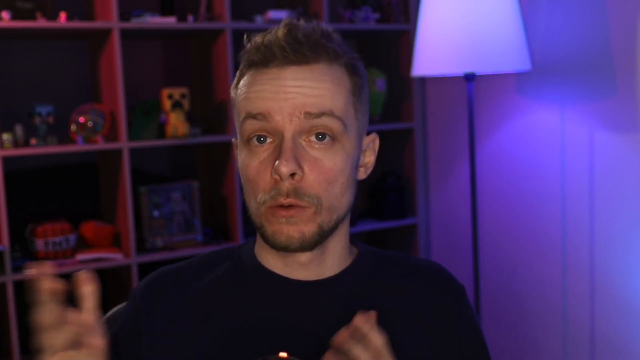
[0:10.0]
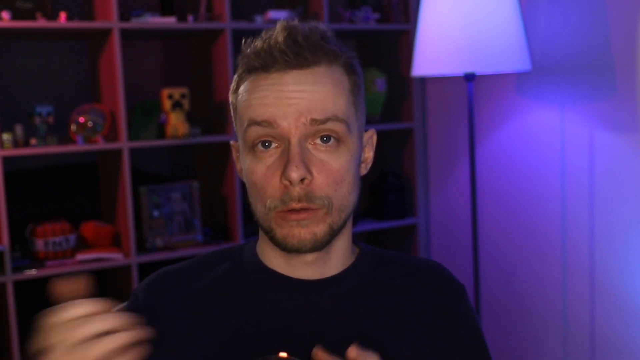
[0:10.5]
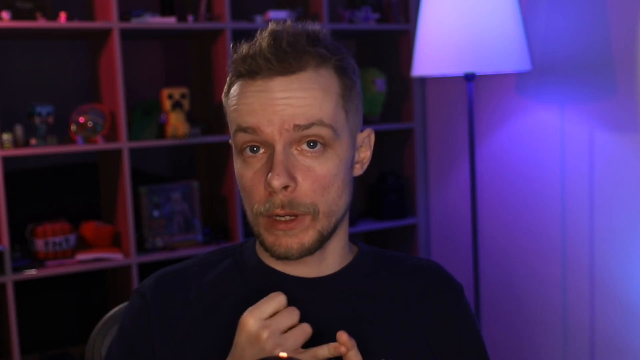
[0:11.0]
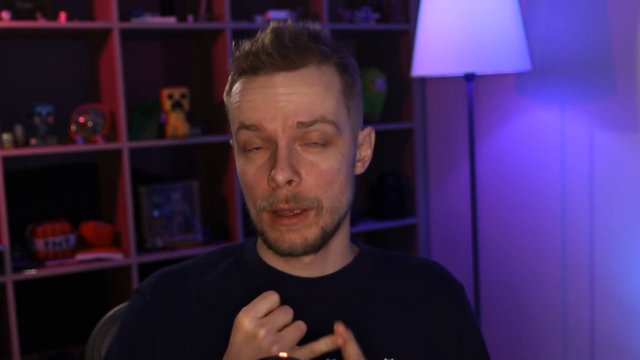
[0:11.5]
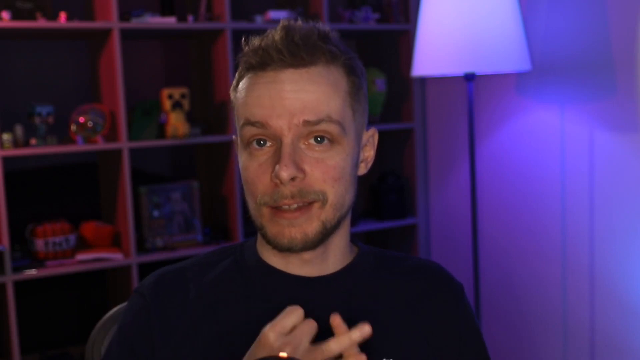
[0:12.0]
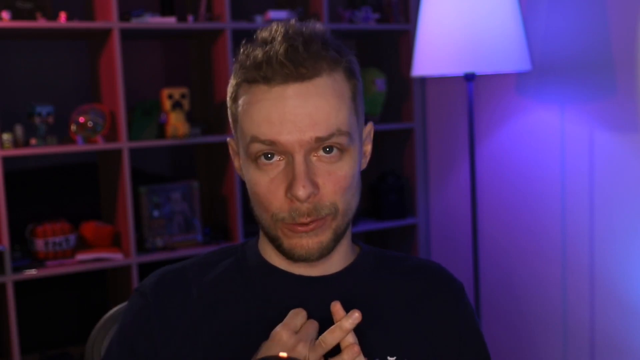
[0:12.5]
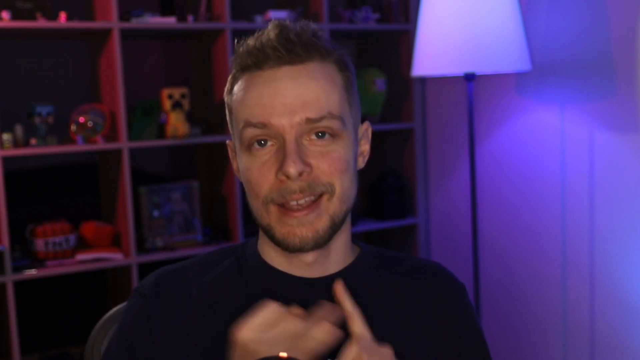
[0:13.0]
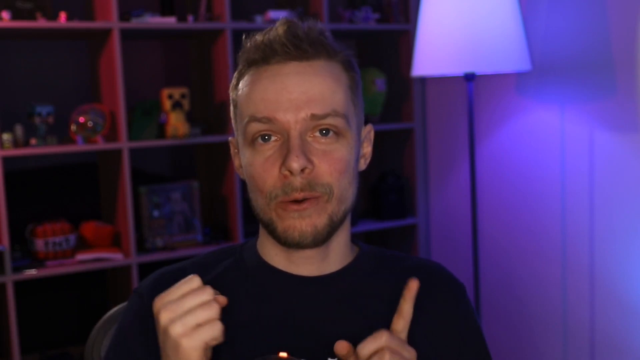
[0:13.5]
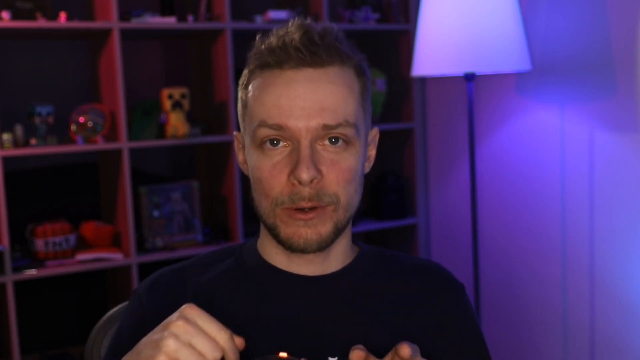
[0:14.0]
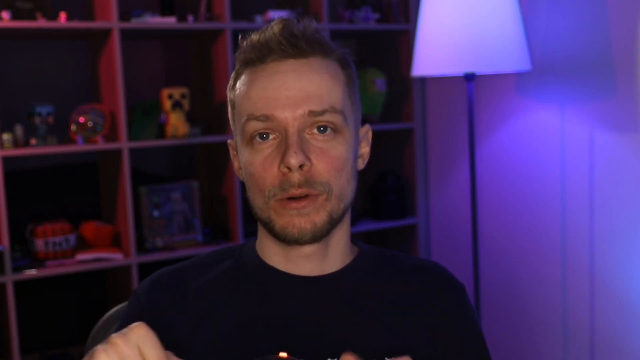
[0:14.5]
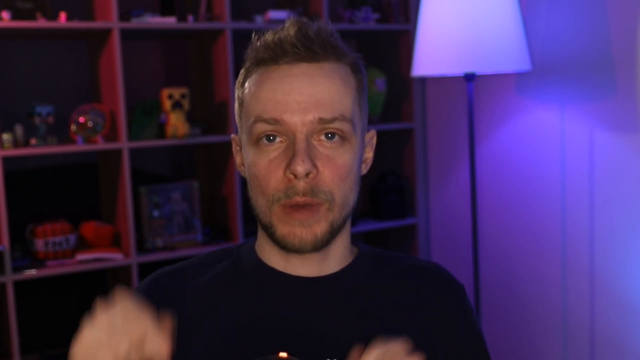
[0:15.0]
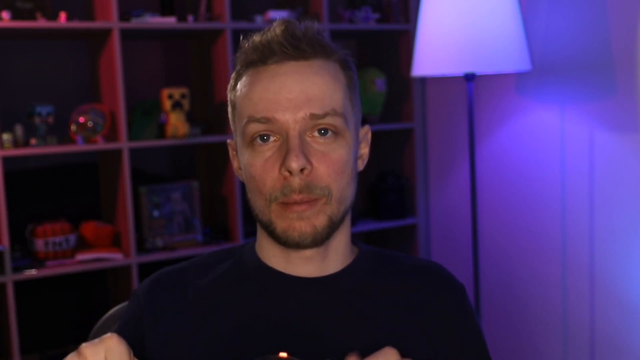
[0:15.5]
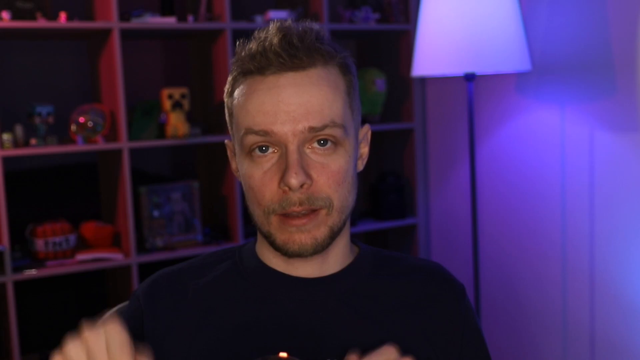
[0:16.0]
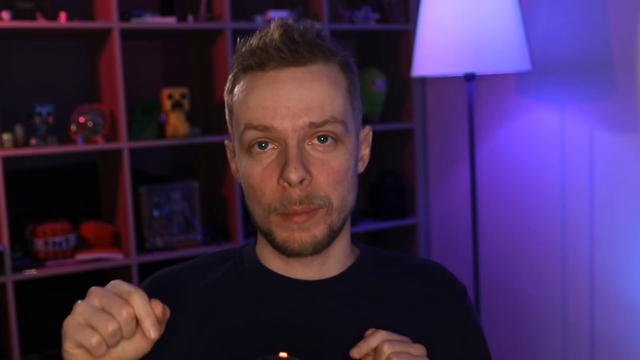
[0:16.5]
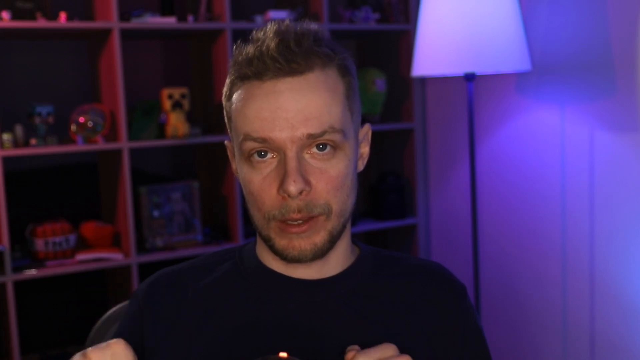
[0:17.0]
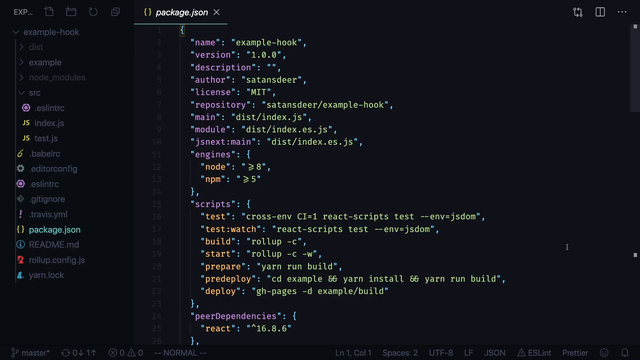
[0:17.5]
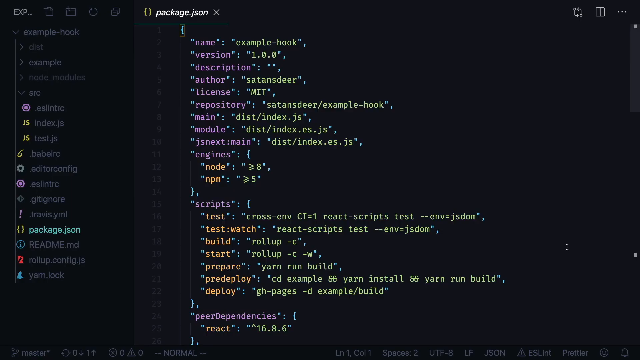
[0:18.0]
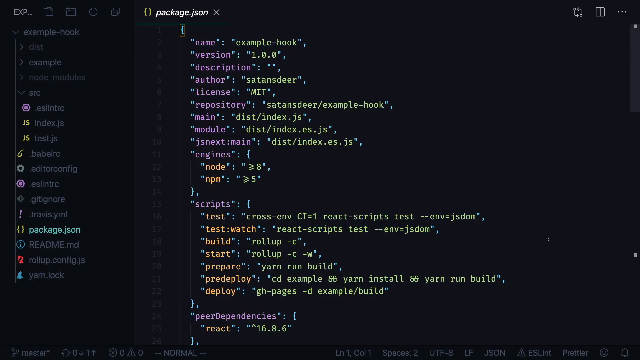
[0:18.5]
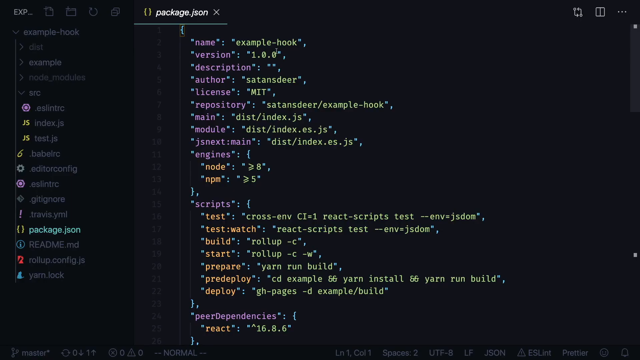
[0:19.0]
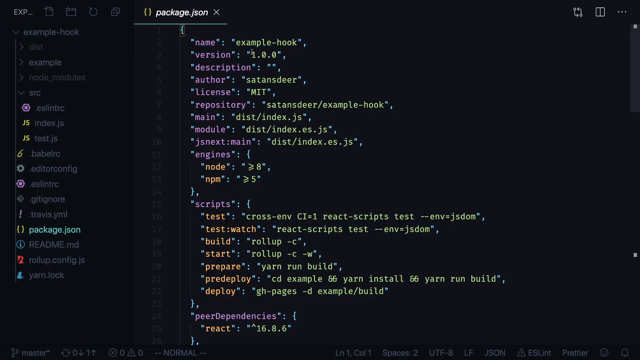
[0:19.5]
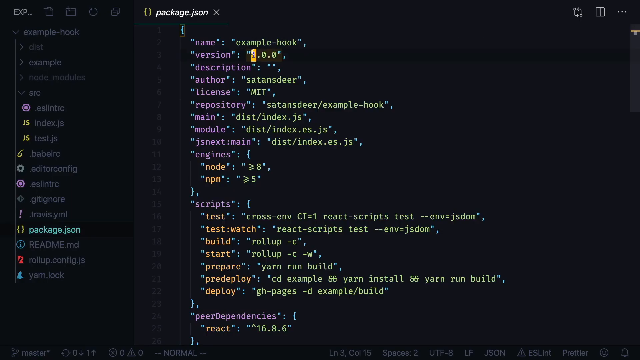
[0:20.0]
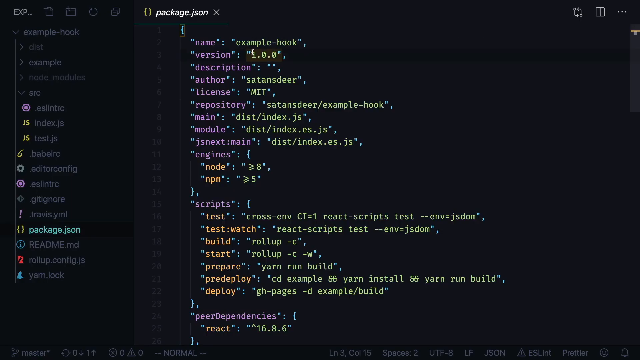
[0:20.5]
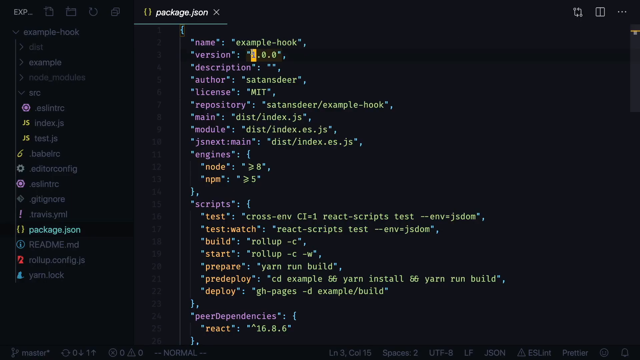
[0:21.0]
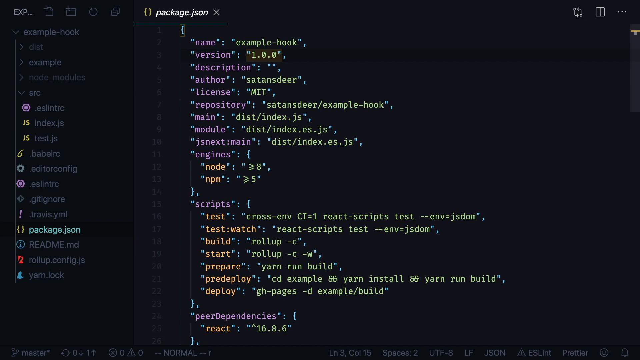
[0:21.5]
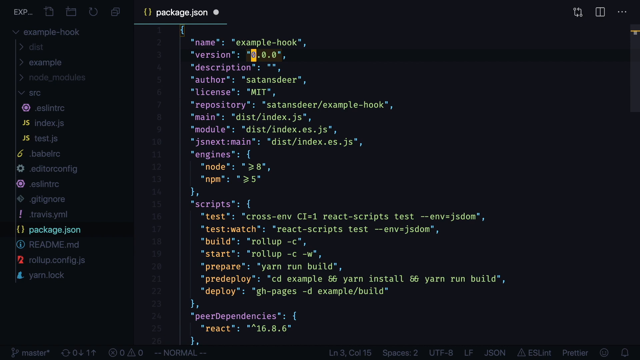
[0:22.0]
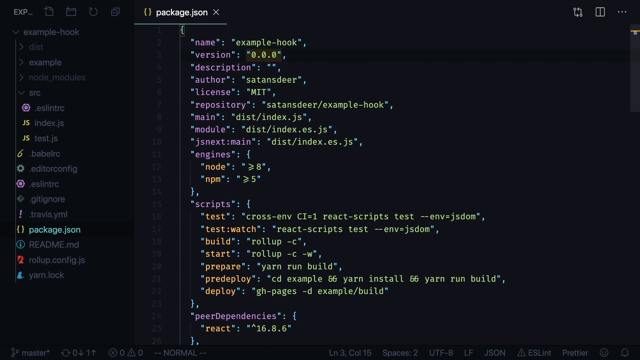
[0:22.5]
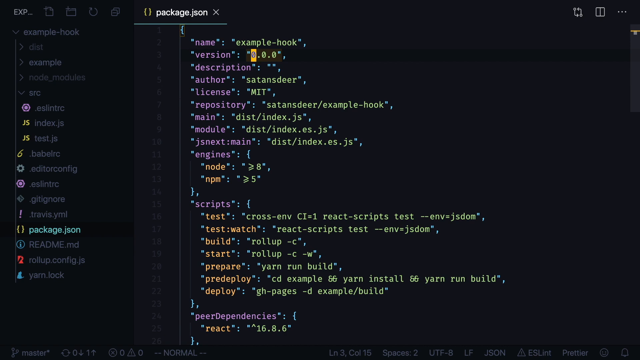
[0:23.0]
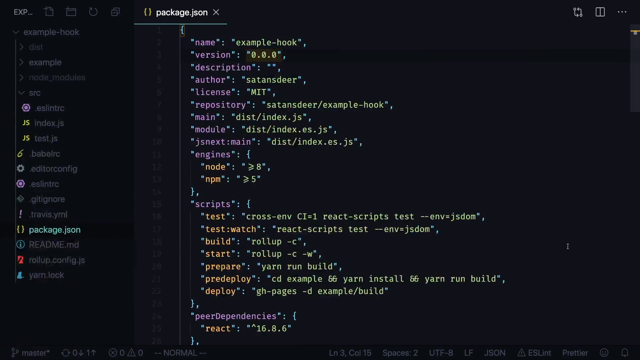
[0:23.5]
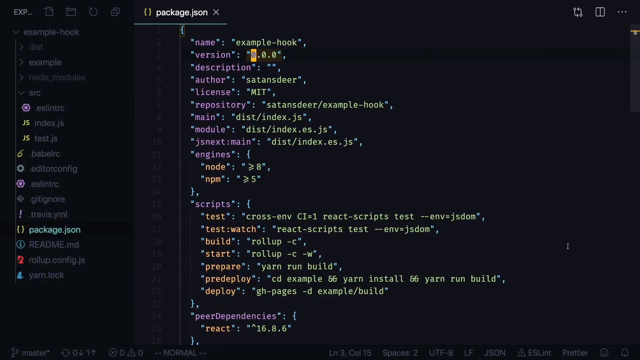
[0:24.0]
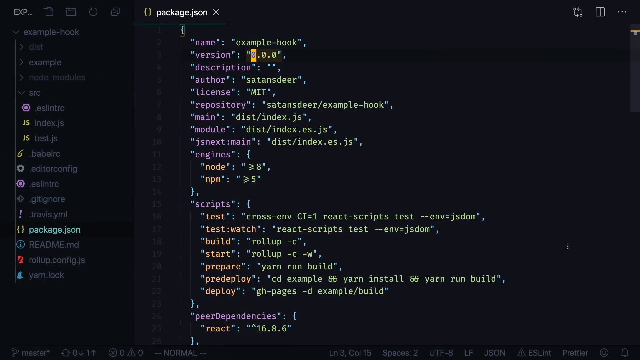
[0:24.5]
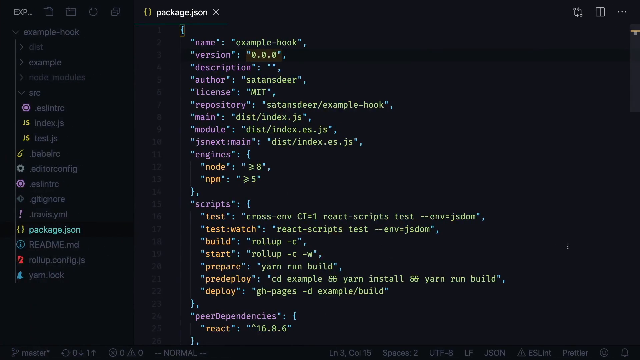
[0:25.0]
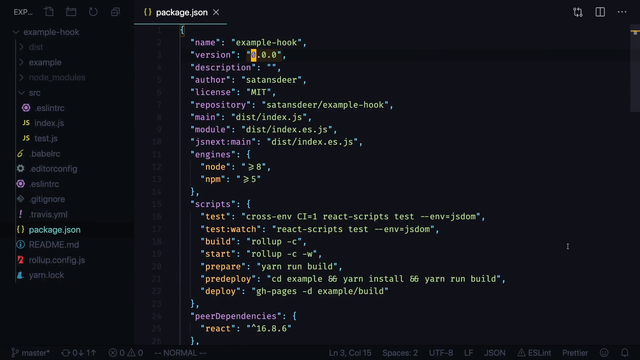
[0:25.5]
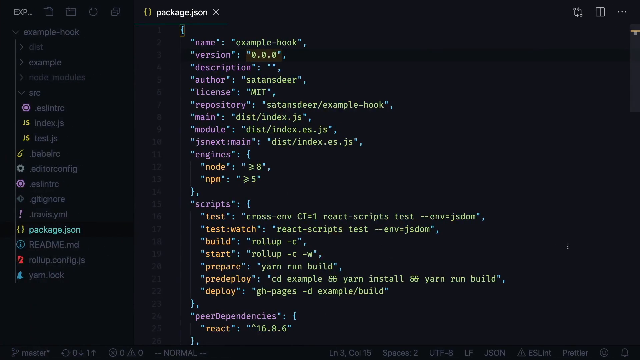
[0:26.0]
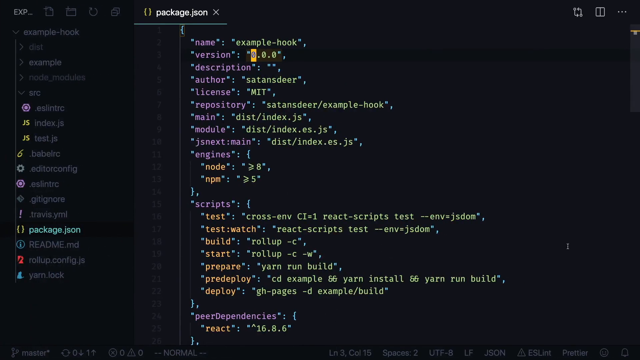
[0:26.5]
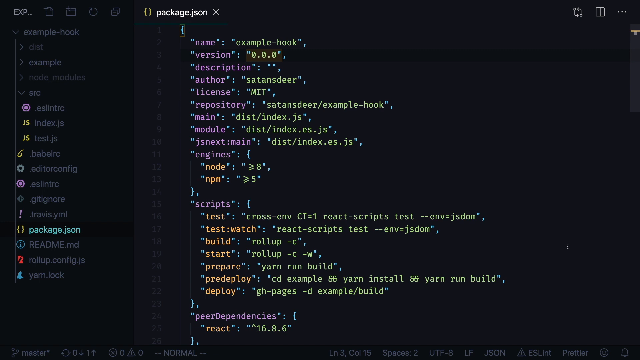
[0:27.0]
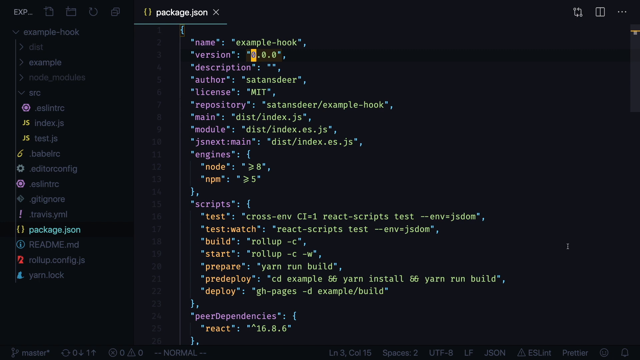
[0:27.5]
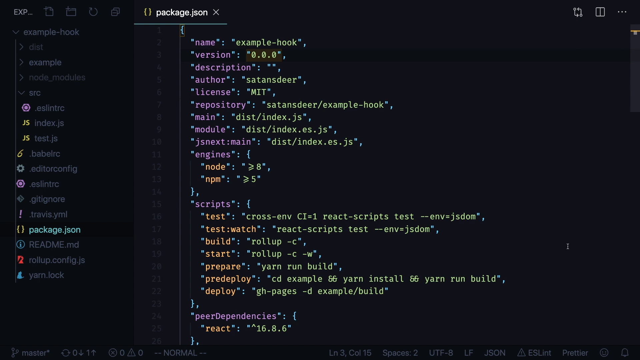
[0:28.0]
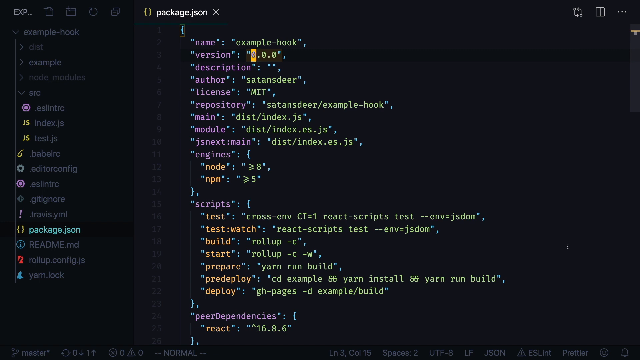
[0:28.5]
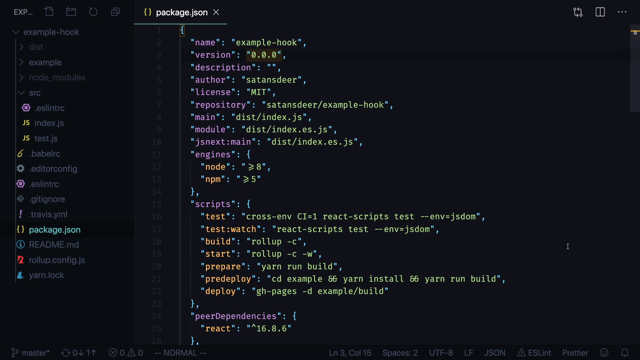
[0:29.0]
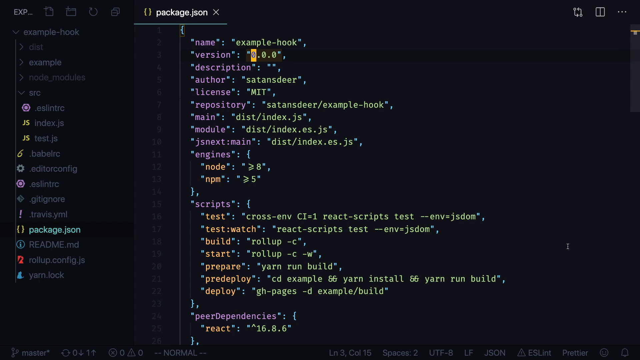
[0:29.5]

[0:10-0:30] The man with spiky, gelled-up brown hair and a navy t-shirt talks to the camera. On the back right is a purple wall, and in front of it is a lamp with a black pole and a white lampshade casting a shadow onto the wall behind. A large shelving unit in the background has at least 16 individual squares holding a variety of toys or collectible items, including a green Among Us character and a yellow Minecraft character. He holds out his right hand with the pinky extended and presses his left index finger against it, then lowers the pinky, lifts the next finger and touches that with his index finger, as if counting. He separates his hands, the right in a fist and the left in a fist with the index finger pointing forward, then closes both hands, kept apart, with the index finger very slightly extended at the bottom pointing downwards as he moves his hands back and forth. The video then cuts to a screen full of code: white text at the top reads "package.json", with purple, green and orange text in the drop-down below, and a black menu on the left side lists the different sections in grey text. The user highlights the green number 1 next to the purple text "version" several times and changes it from 1 to 0. The spot where the number was changed flashes yellow on and off several times.